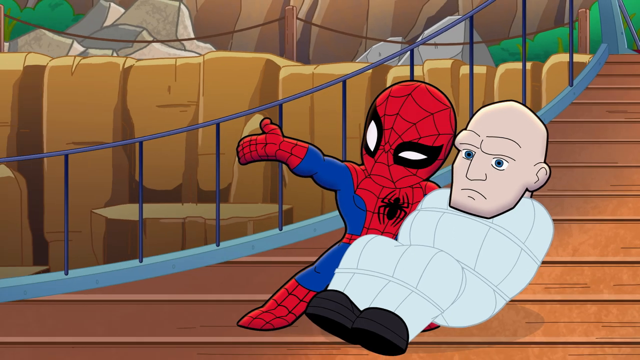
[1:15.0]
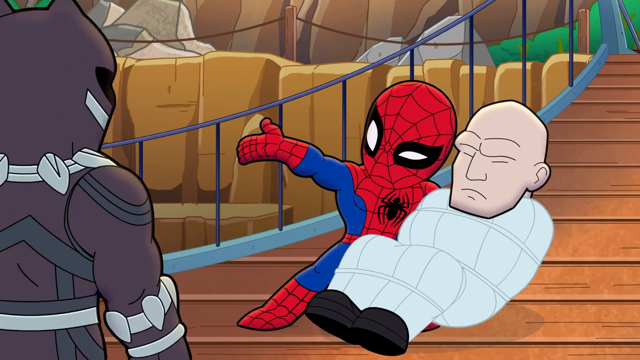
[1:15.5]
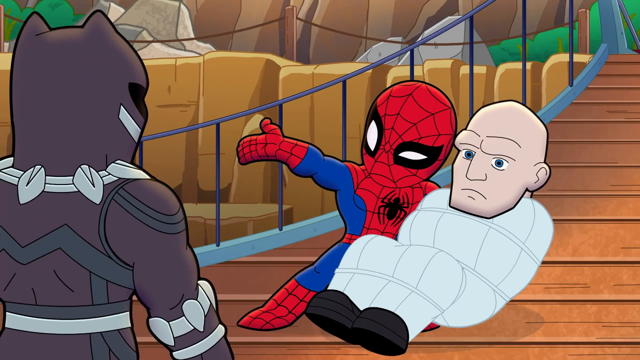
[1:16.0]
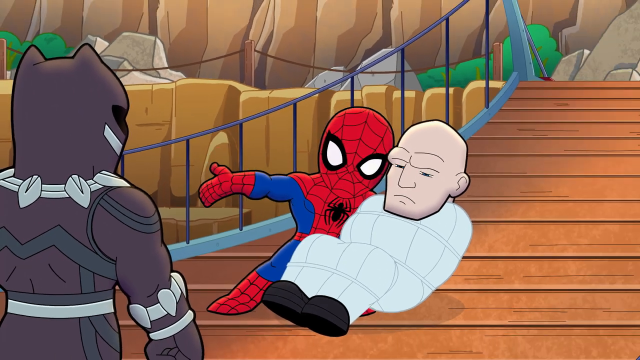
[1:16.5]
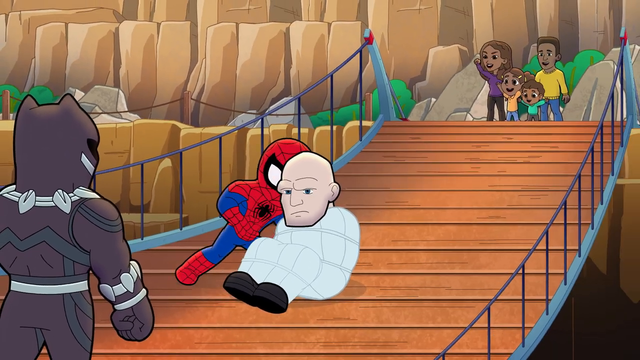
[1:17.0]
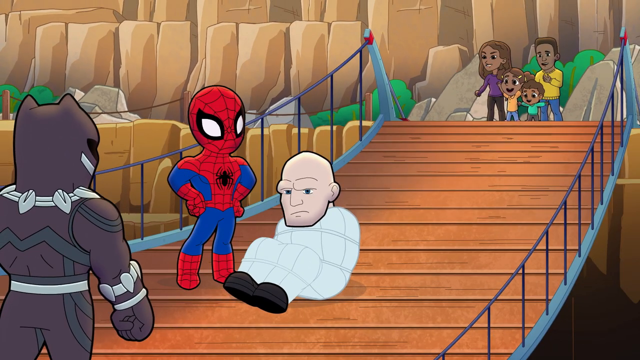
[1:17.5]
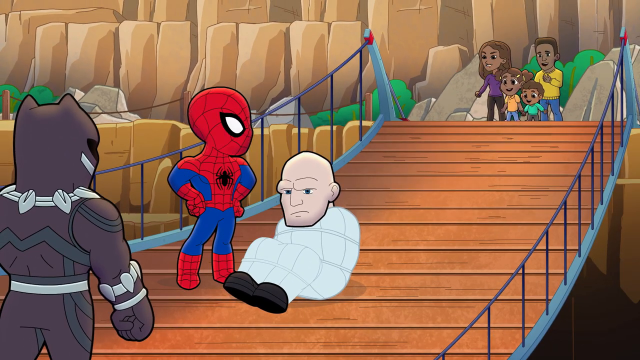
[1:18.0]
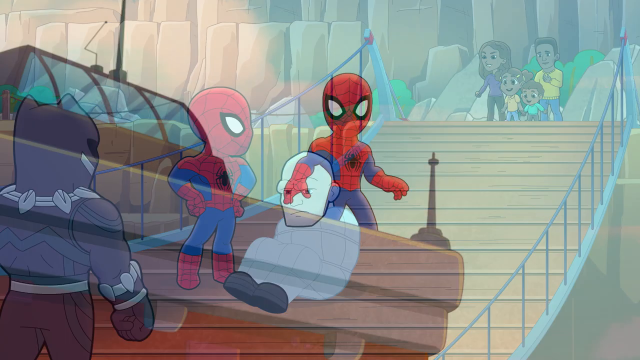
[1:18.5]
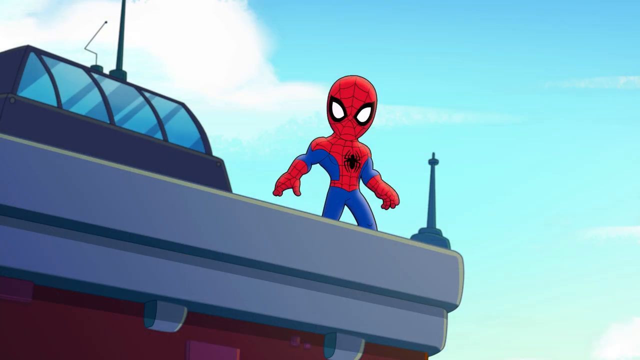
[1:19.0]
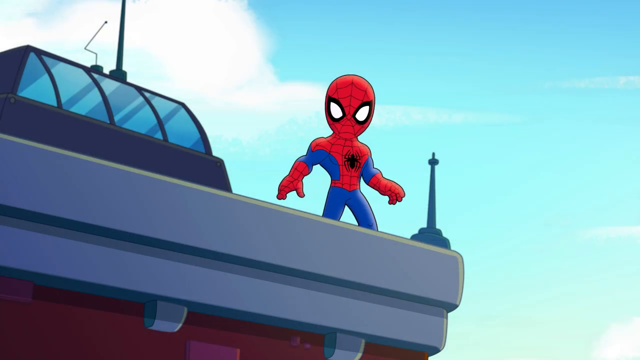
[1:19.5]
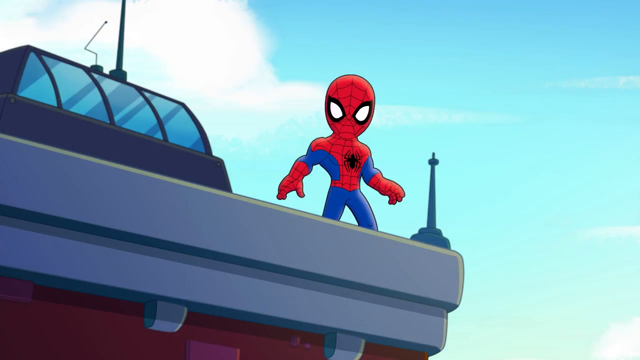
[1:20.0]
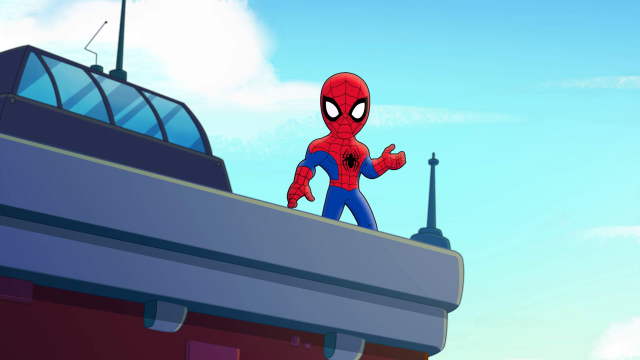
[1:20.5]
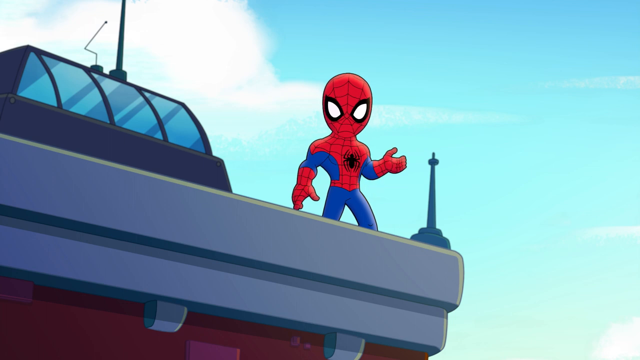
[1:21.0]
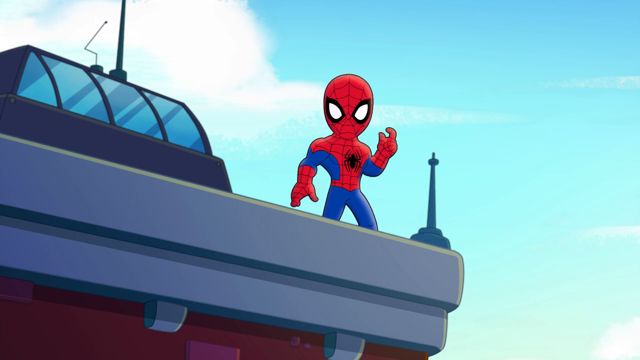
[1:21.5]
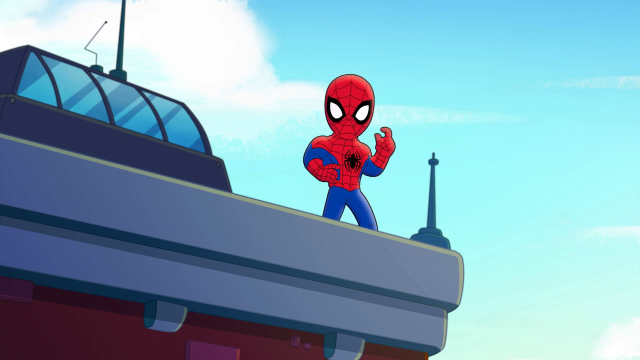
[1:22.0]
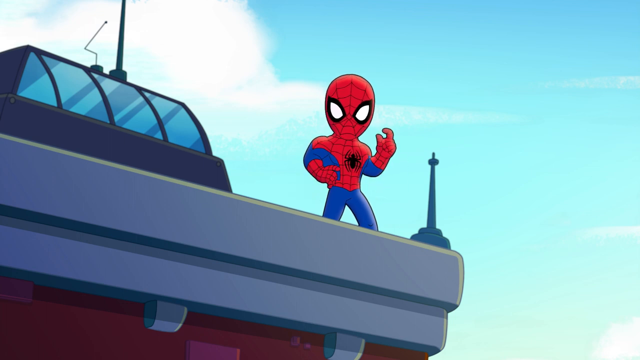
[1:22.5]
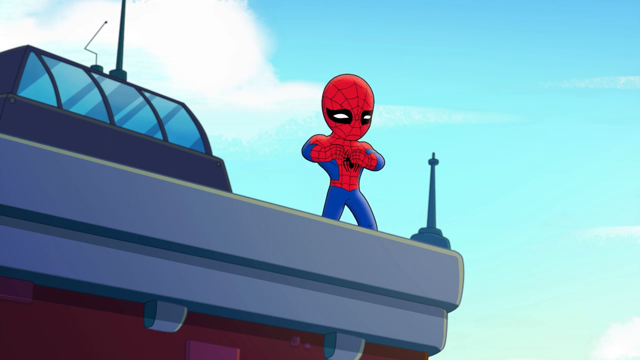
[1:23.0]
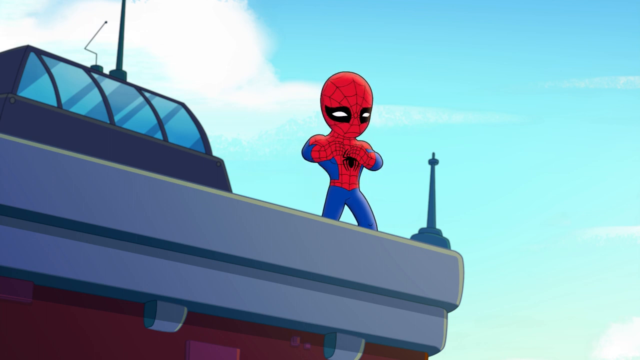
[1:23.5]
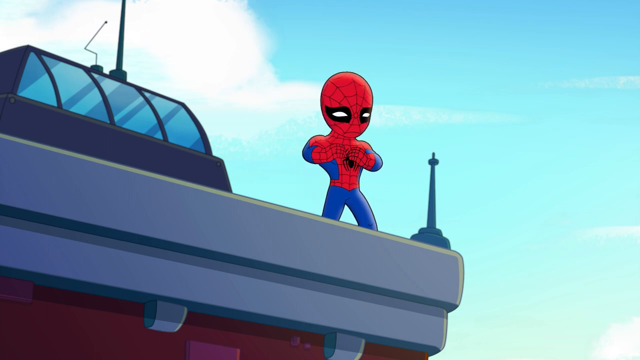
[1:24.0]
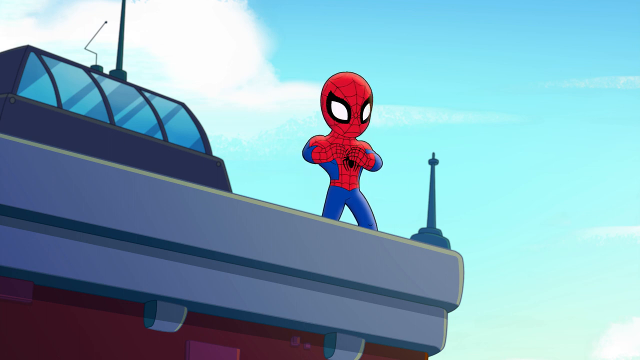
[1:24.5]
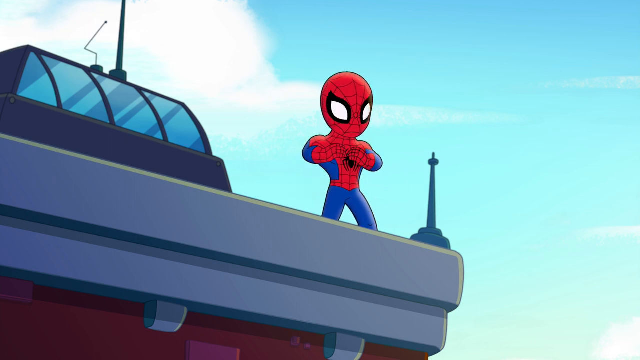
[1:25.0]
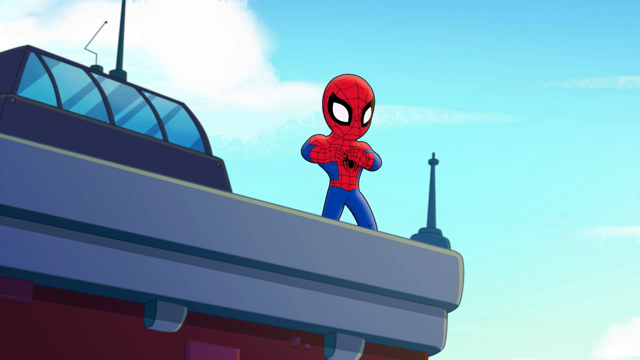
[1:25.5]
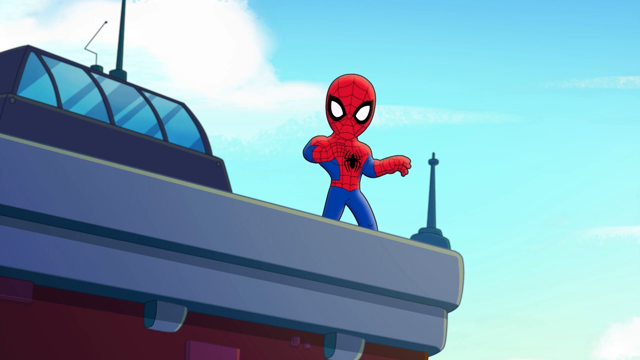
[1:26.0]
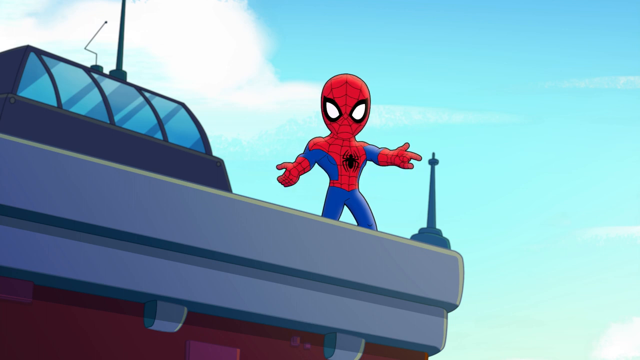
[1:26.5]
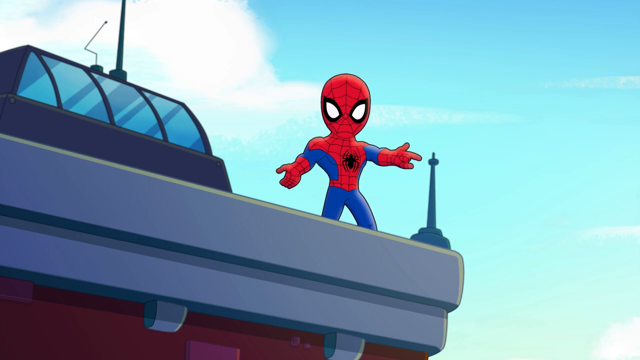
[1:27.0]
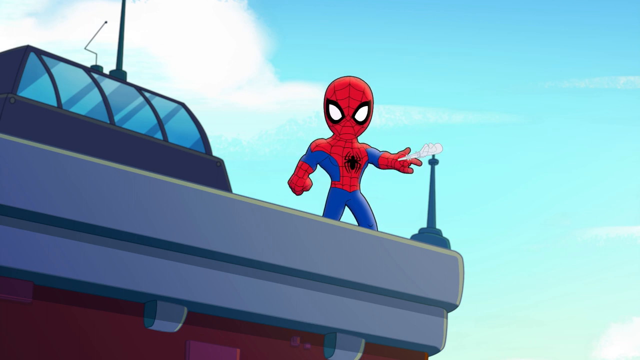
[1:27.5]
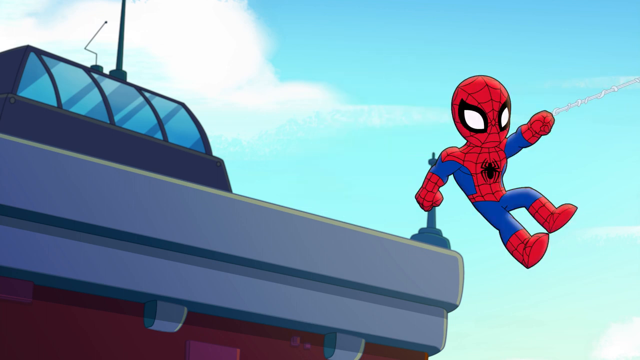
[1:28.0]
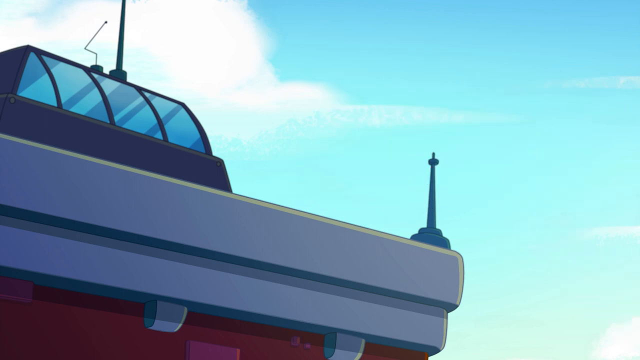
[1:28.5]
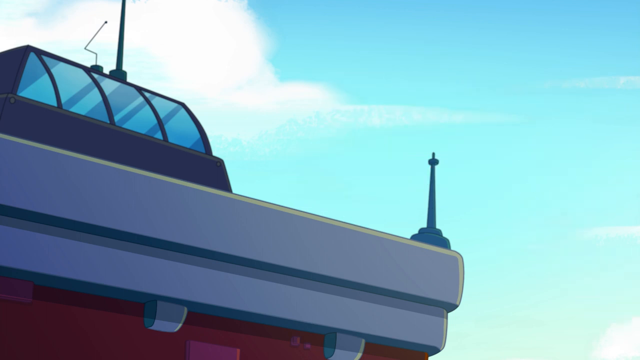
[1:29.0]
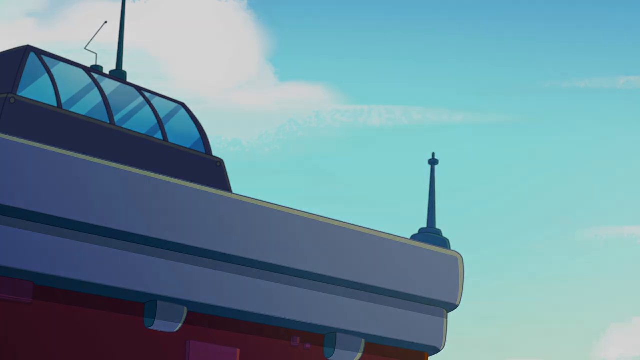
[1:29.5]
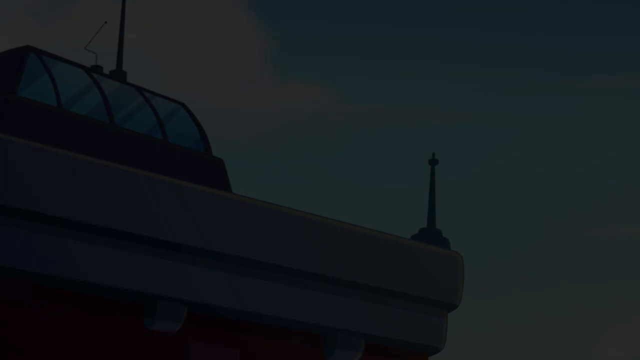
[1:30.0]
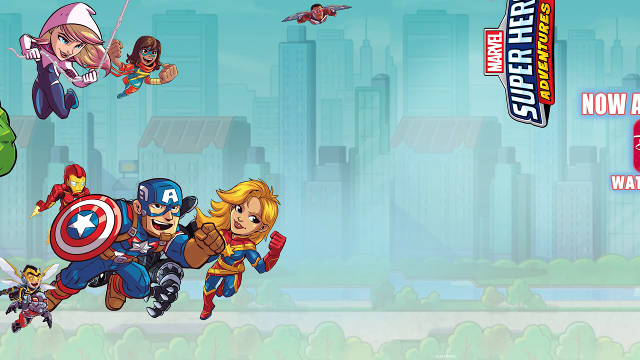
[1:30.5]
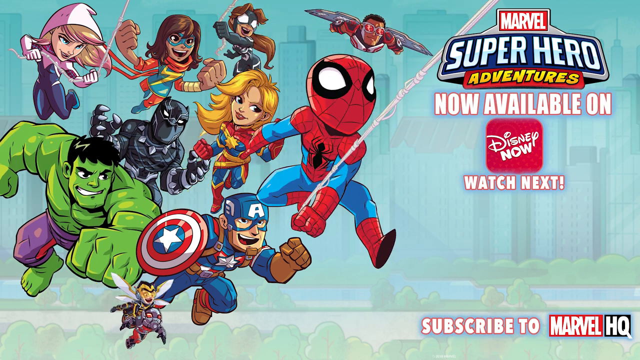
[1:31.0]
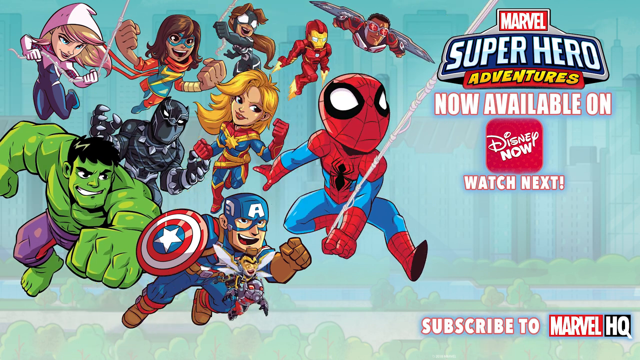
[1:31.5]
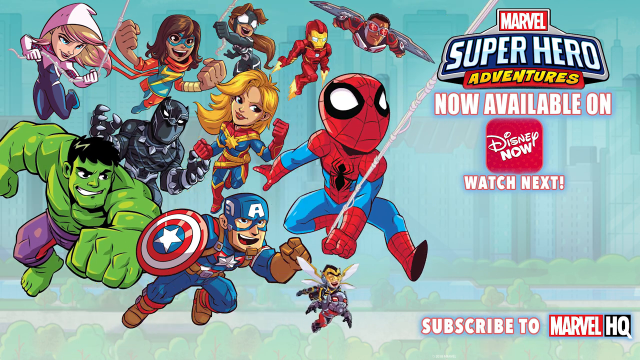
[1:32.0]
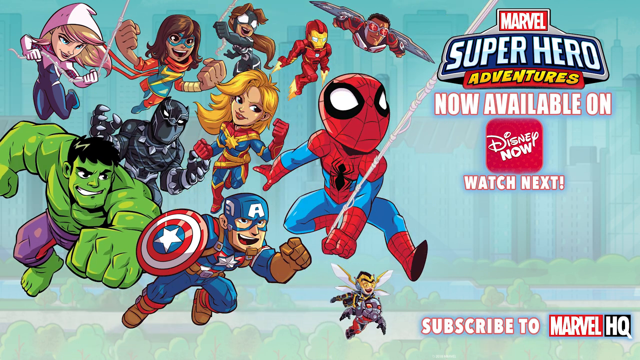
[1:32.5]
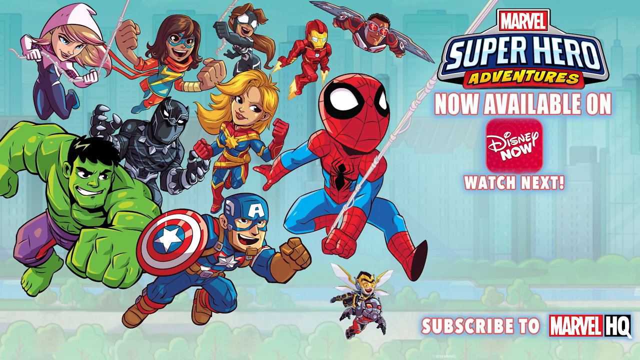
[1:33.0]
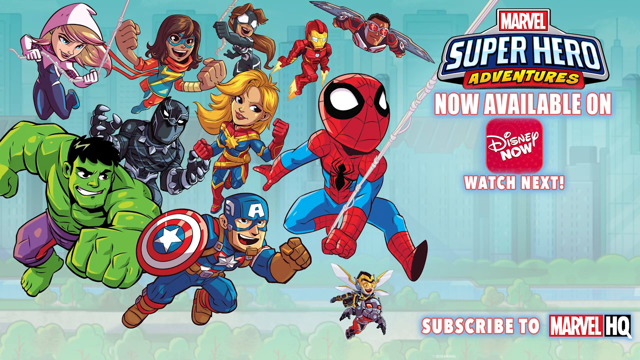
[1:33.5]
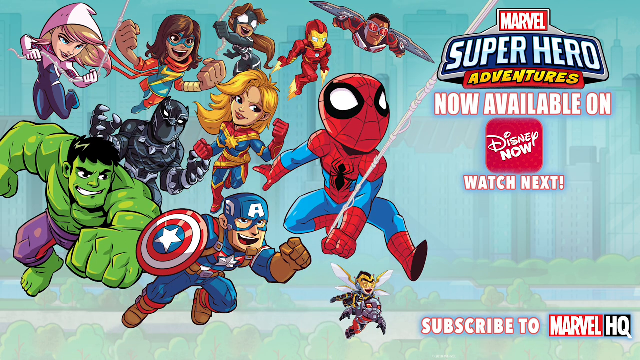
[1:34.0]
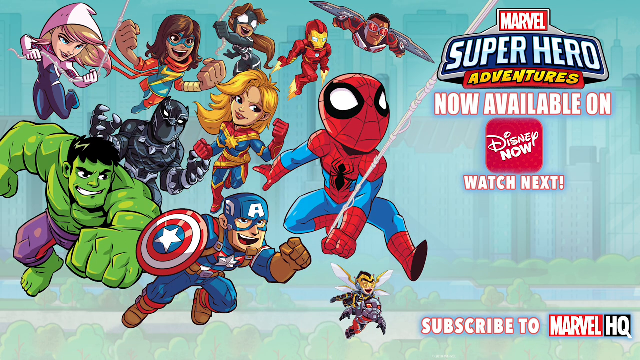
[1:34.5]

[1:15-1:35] A shot shows the bald man, wrapped mummy-like in spider web, on the bridge. Spider-Man looks like he stands next to him in relief and looks back at the kids at the other end of the bridge. The maroon-clad superhero walks up into the frame on the bridge. The scene shifts to the top of a building, where Spider-Man, with his big head and big white eyes, seems to be directing a soliloquy to the viewer. He grabs from his hand what looks like a long rope, his web, exits the roof and swings, presumably to the top of another building nearby. The Marvel Superhero Adventures logo then appears, with a group of superheroes on the left side of the screen, including the Incredible Hulk, Spider-Man and several others, flexing.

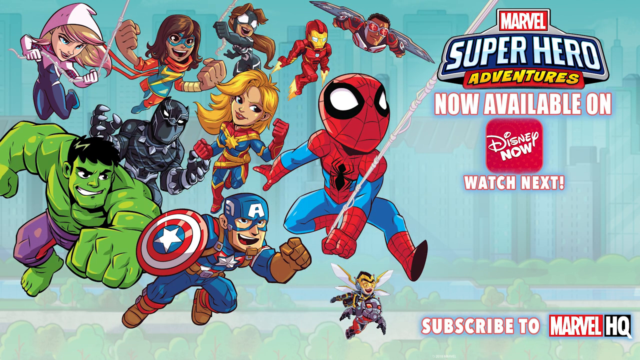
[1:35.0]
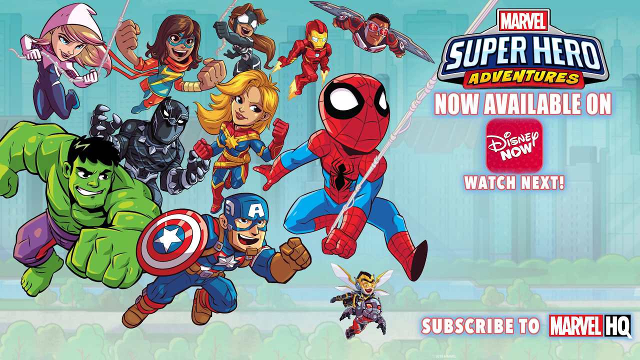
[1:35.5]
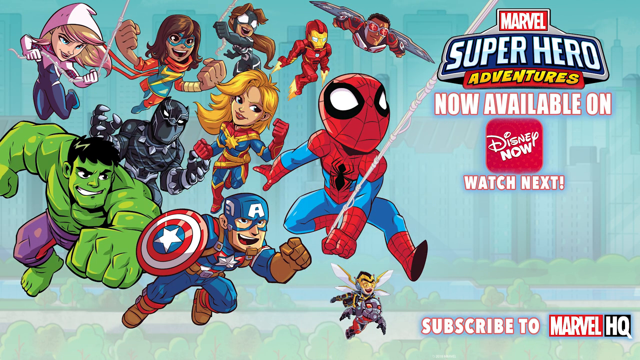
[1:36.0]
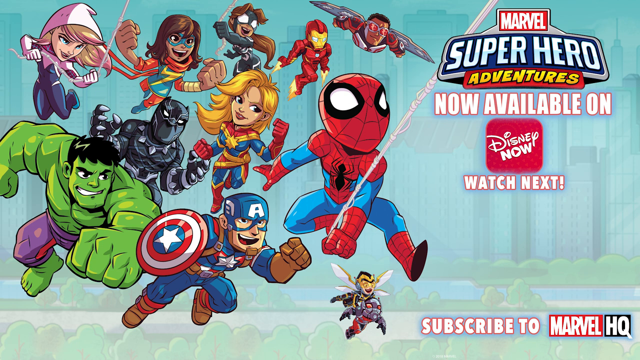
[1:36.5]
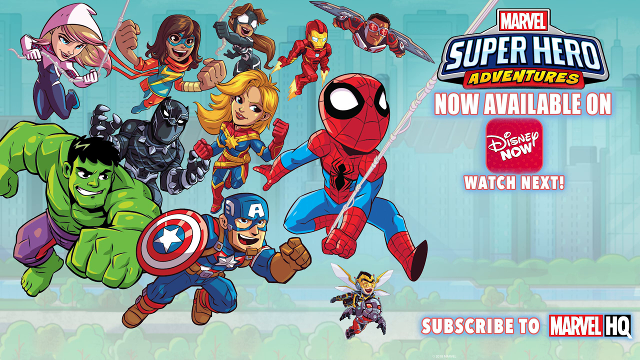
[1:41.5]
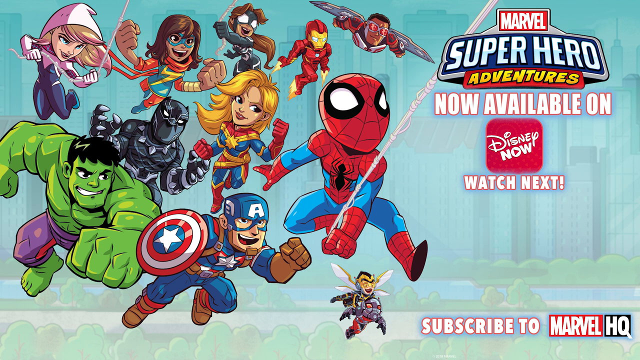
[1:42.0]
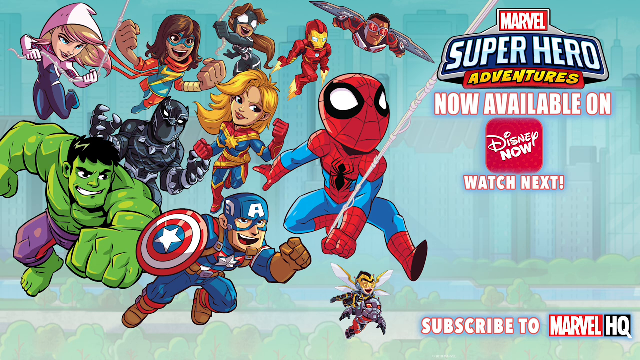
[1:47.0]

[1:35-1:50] A title shot shows what appear to be all the characters, possibly from the Marvel Superhero Adventures series. A logo reads "Disney Now, Watch Next", and text at the bottom of the screen reads "Subscribe to Marvel HQ". The characters are racially mixed and wear different costumes. The cartoon Spider-Man looks like a Spider-Boy, his big head apparently making him look like a young boy. There is what looks like a soon-to-be Captain America, the maroon-clad superhero, who looks dark here and has what look like cat claws, and the very green Incredible Hulk. Several female characters seem to be able to fly, and in fact all of them seem able to fly. One small, bumblebee-sized character has a devilish expression. Others are sort of jumping and twisting, with smiles and fierce expressions, their fingers pressed into fists as if ready for action.